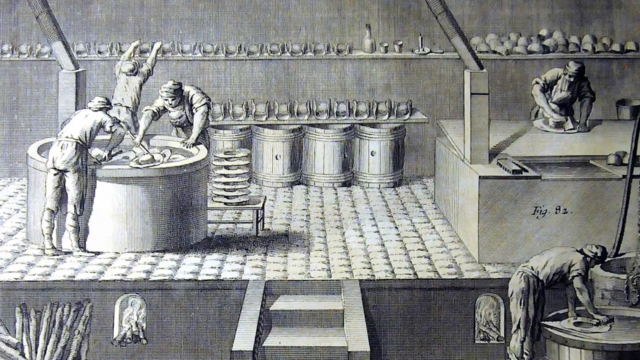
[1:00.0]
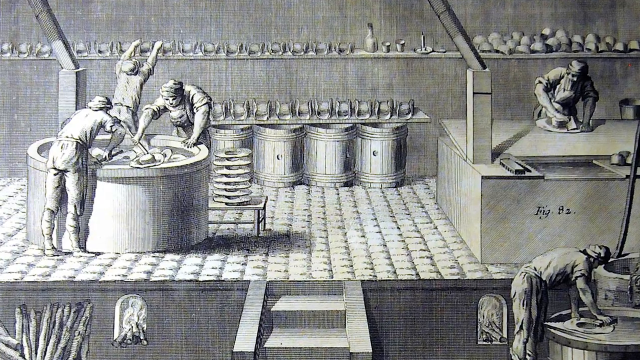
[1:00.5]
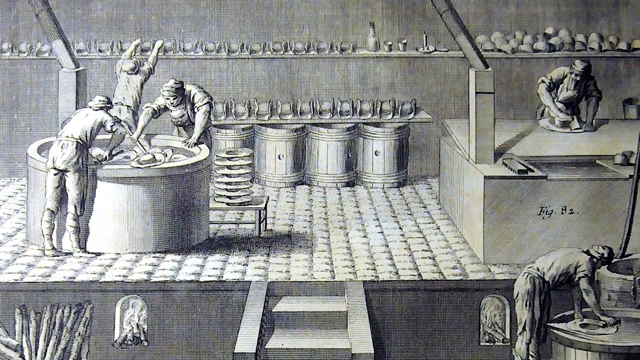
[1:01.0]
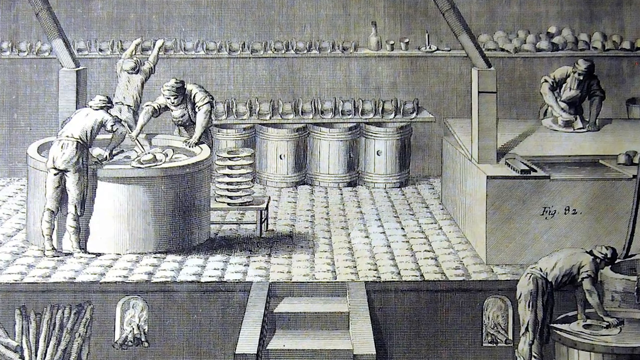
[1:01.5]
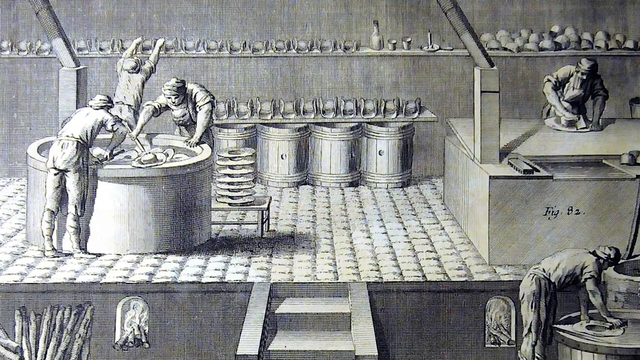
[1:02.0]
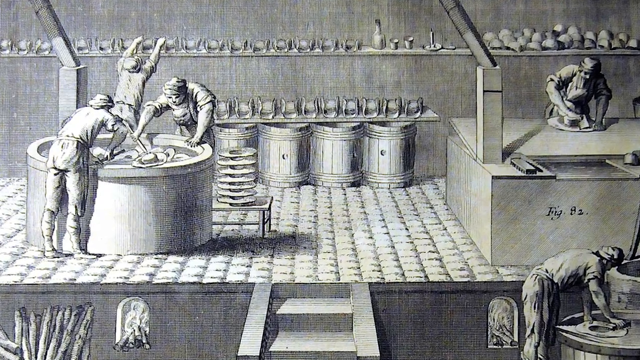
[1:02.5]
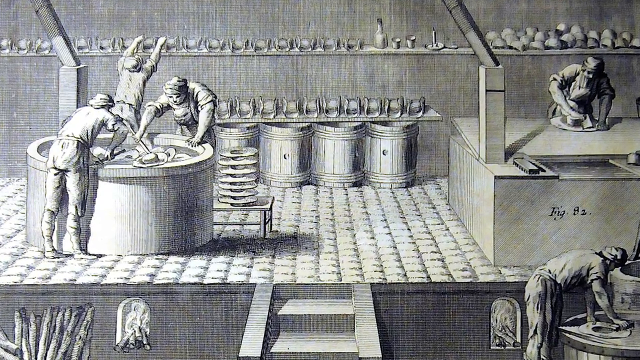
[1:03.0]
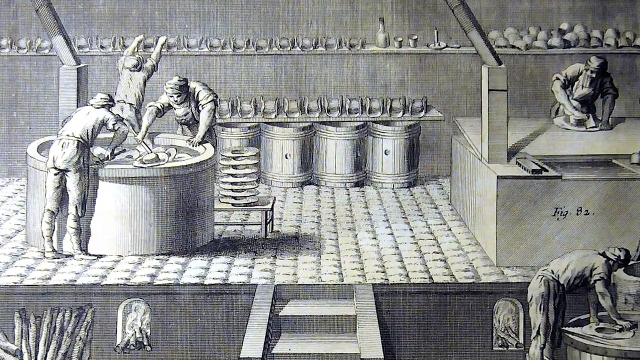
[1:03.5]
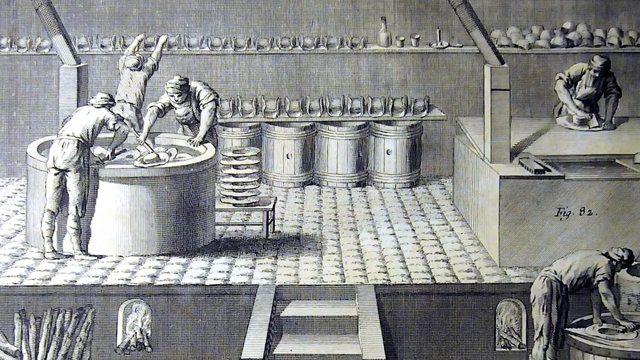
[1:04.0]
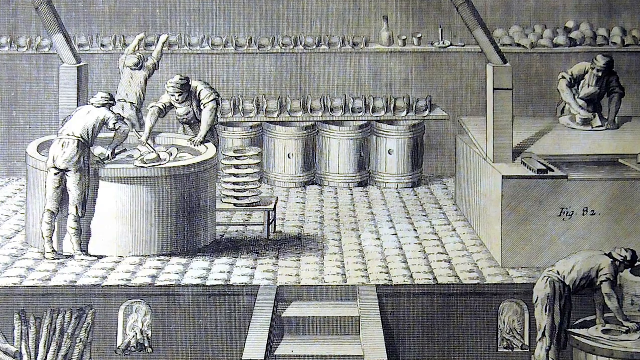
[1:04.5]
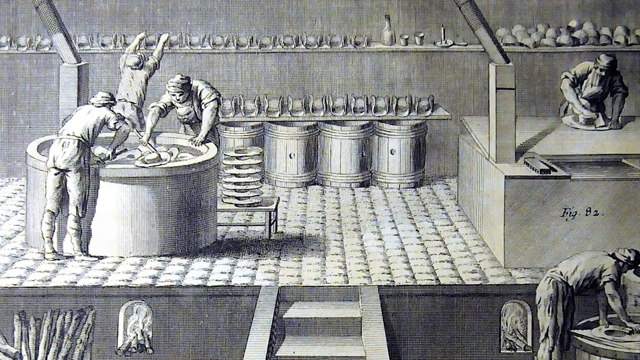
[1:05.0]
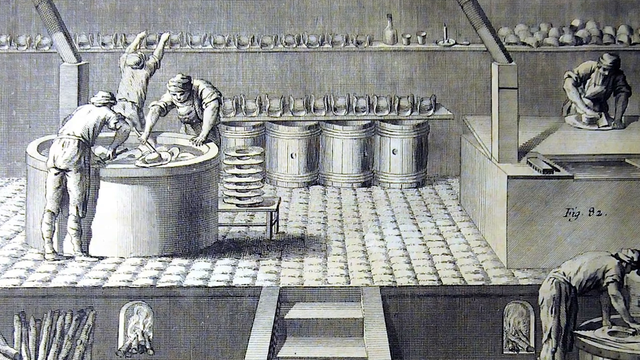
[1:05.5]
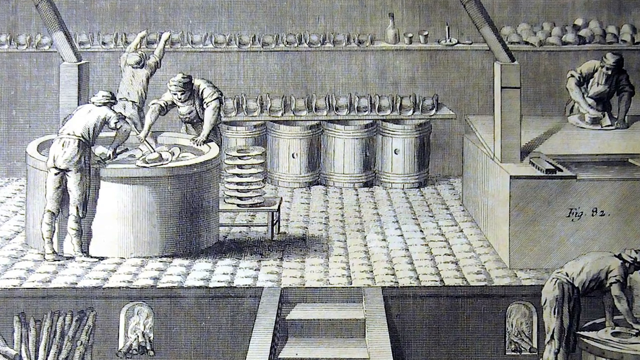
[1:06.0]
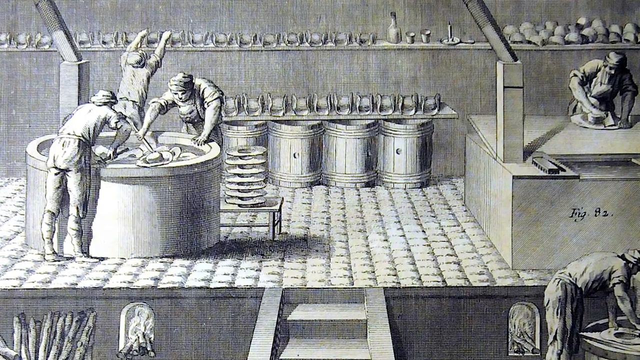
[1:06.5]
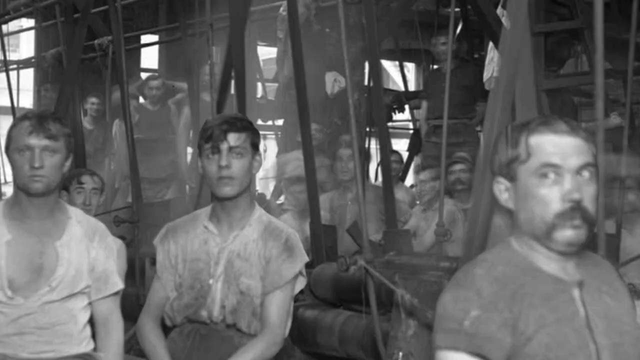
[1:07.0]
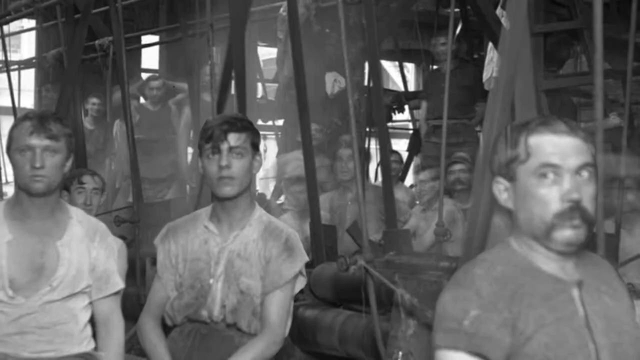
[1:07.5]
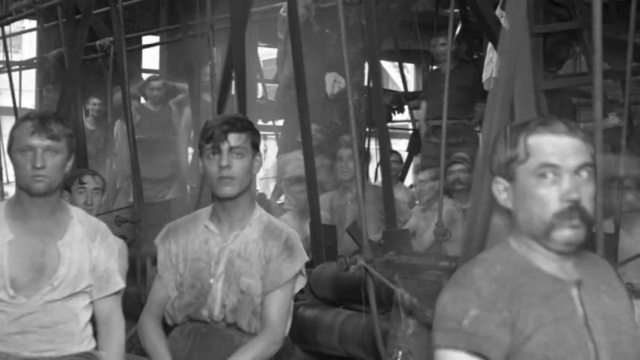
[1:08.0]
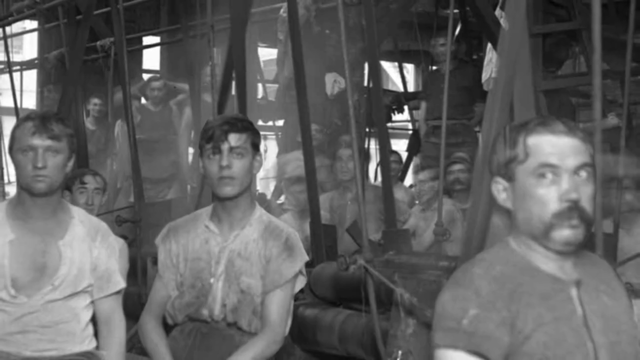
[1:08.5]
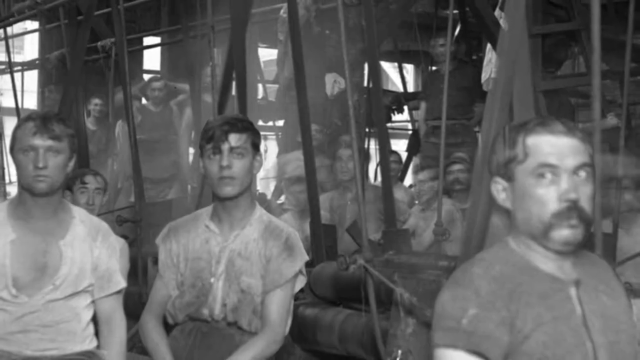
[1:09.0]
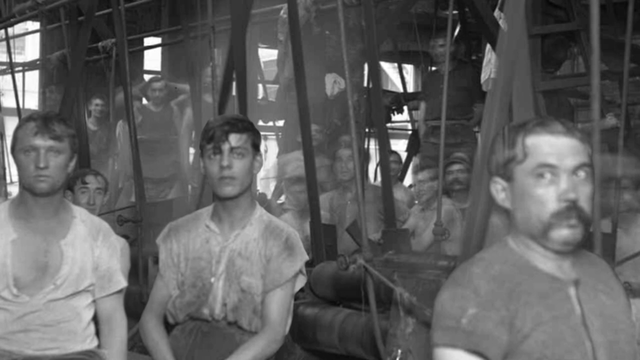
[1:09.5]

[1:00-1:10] Workers use some kind of large barrel and are stirring something. In the background are shelves full of cups and other tools, a row of barrels, and another table where a worker does some kind of task; this is on an elevated platform. It then cuts to a black-and-white photograph, apparently from the early 1900s, of workers in a factory who look very sweaty and dirty and are looking at the camera.